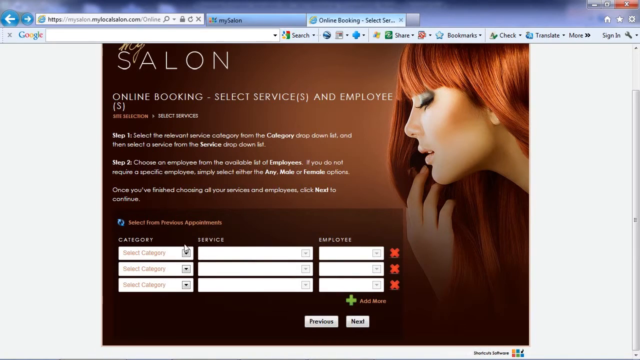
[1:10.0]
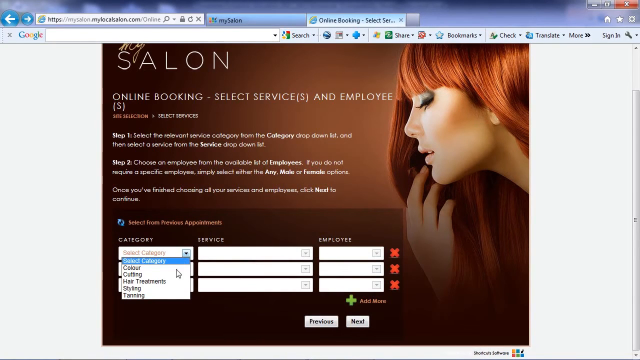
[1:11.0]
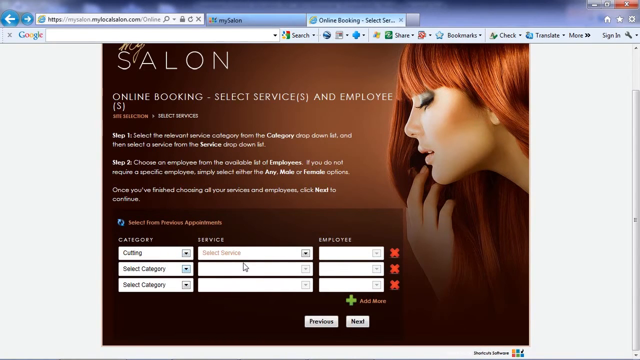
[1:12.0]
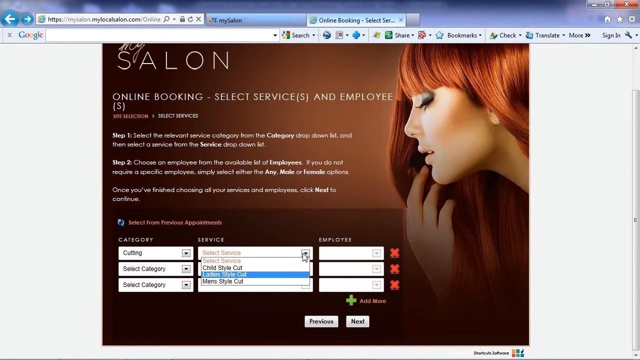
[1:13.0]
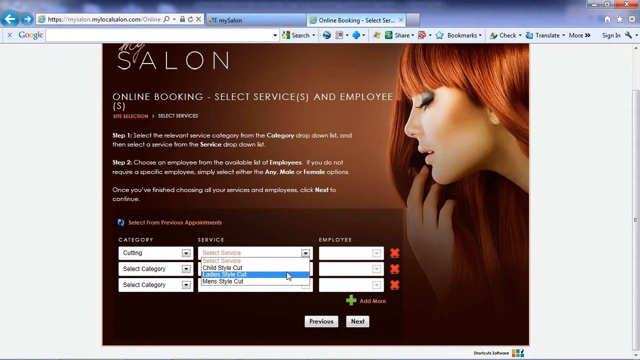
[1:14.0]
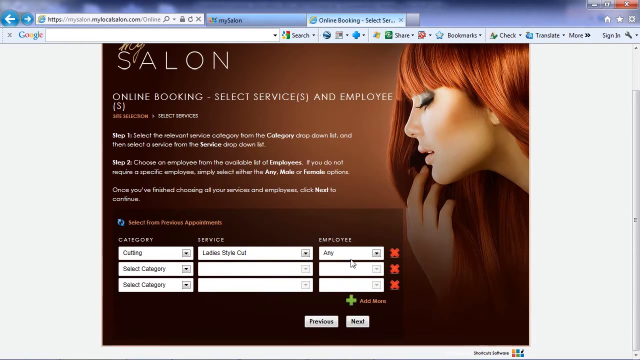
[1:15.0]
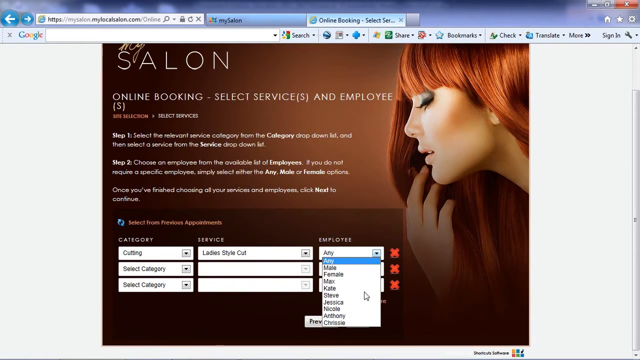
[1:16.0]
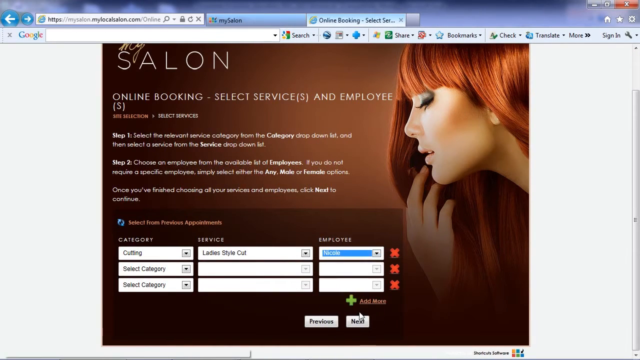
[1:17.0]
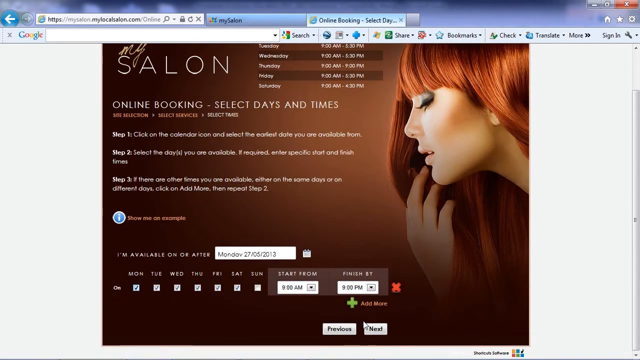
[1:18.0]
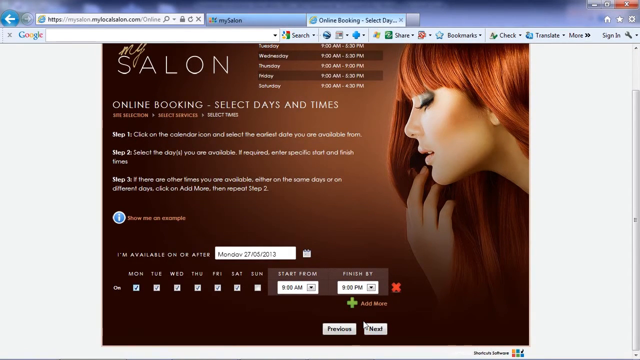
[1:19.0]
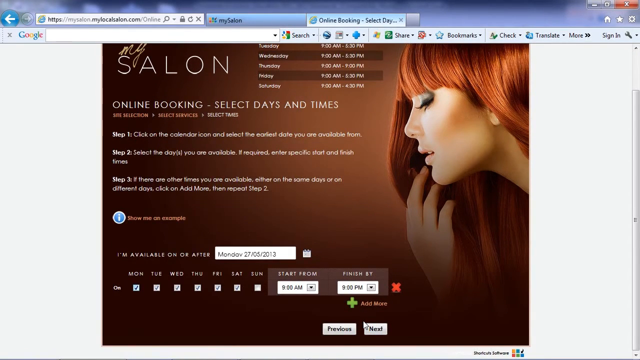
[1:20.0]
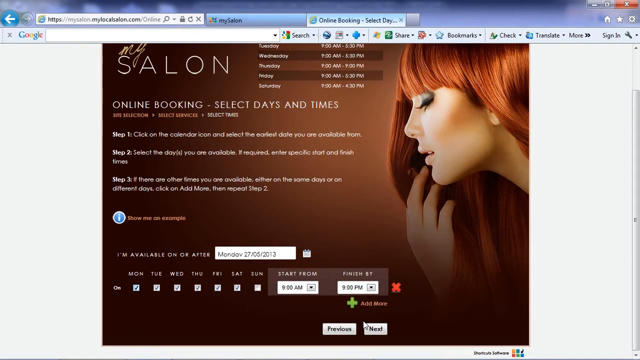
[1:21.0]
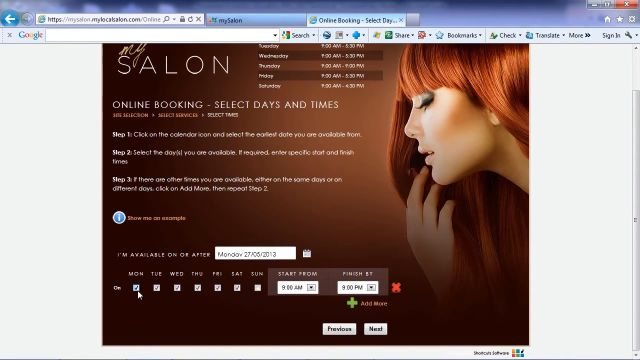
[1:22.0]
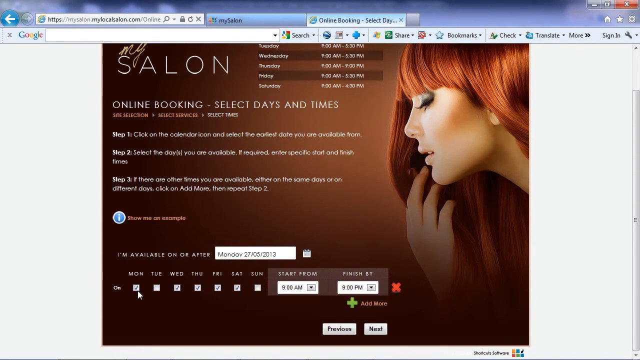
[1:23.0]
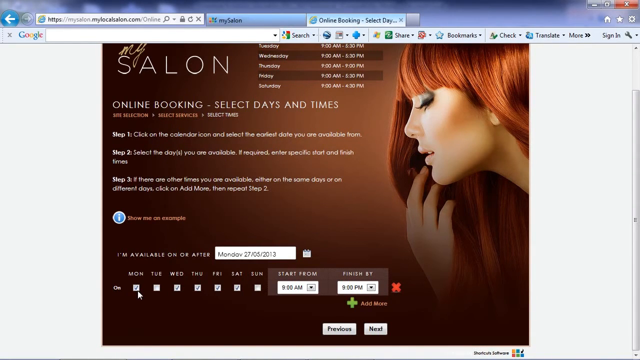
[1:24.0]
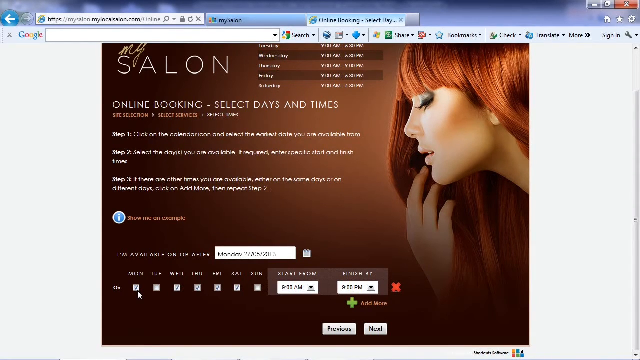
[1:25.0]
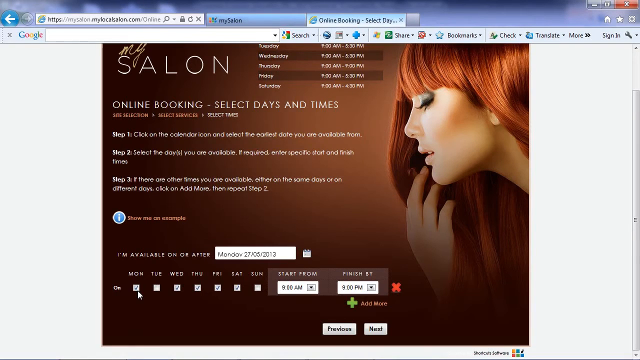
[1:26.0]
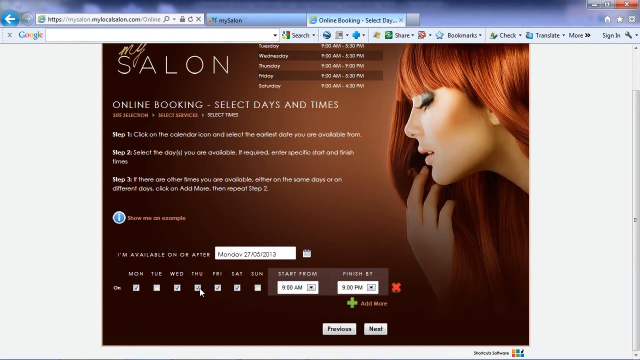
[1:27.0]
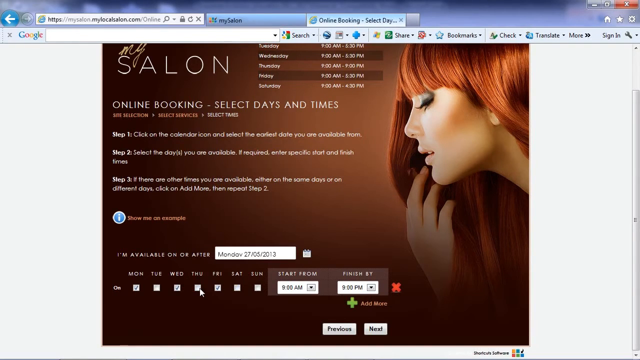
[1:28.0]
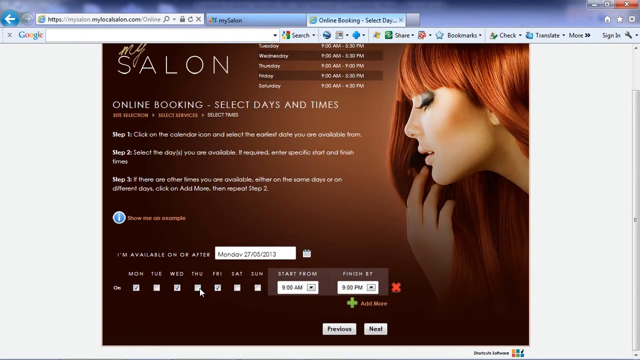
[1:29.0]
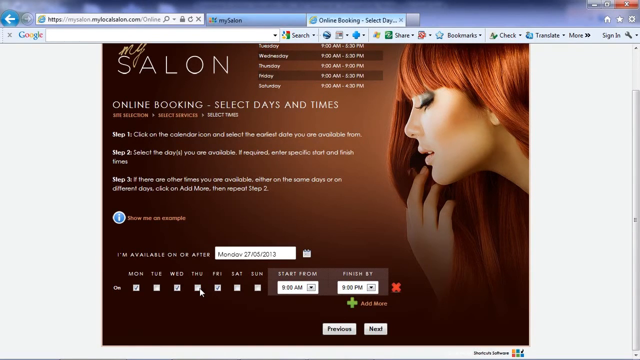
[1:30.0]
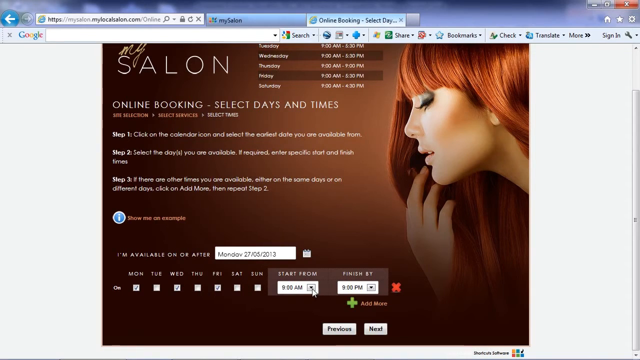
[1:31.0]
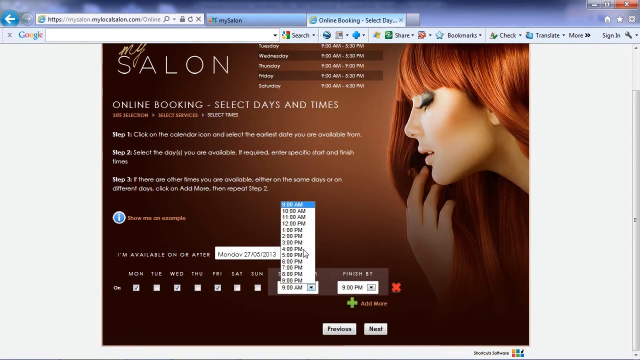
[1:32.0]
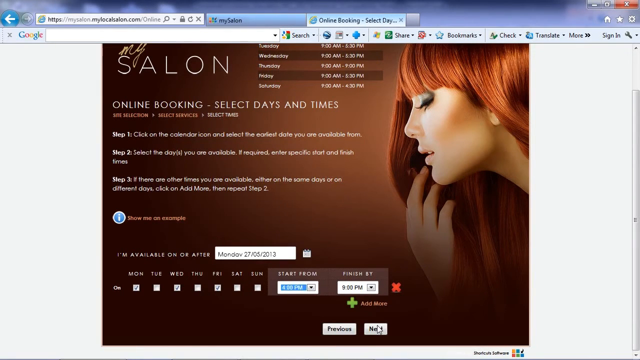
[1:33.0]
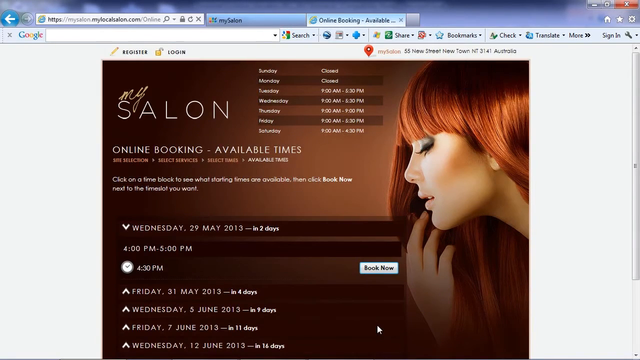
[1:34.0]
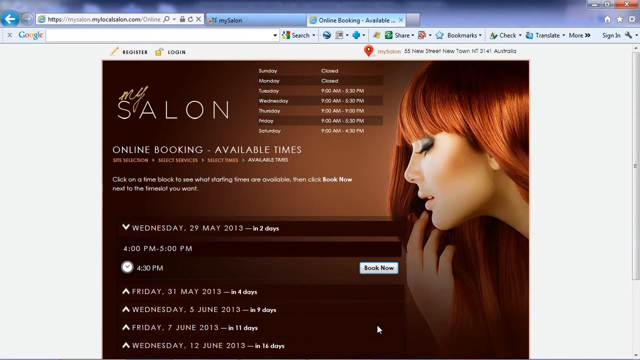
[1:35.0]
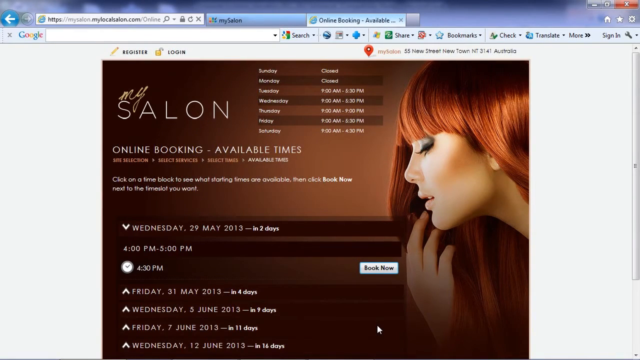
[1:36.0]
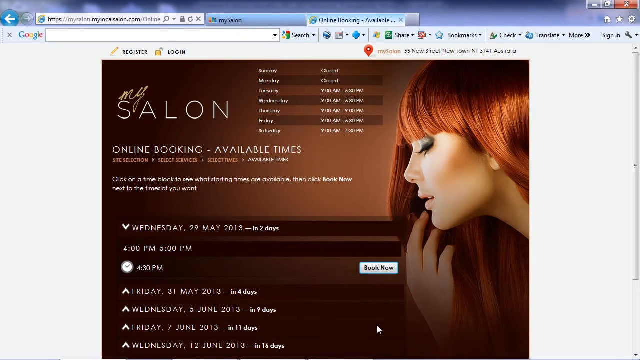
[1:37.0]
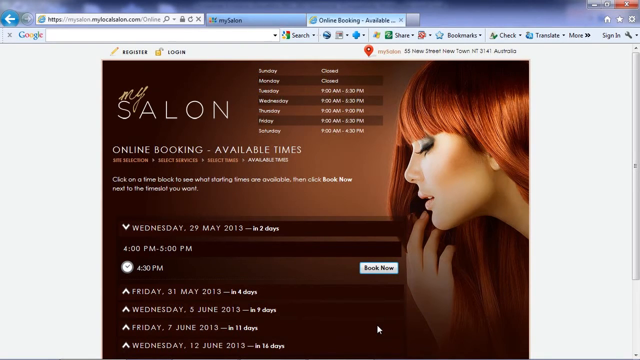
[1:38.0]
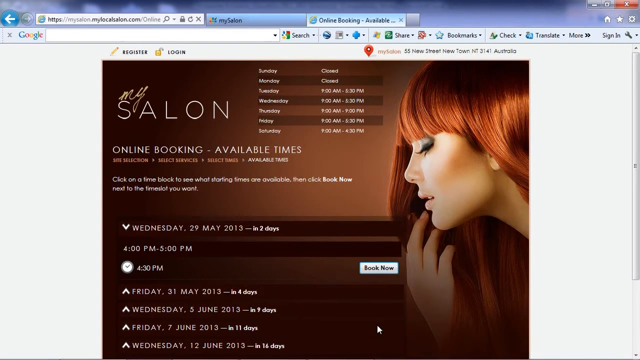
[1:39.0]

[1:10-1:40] The website apparently shows each step: getting into the website, picking a product, choosing colours and a mixture, and choosing a delivery date, after which an estimate is given. It may instead be a poster for someone who does people's hair, showing time slots so that it can be seen when she is available and when she is booked.